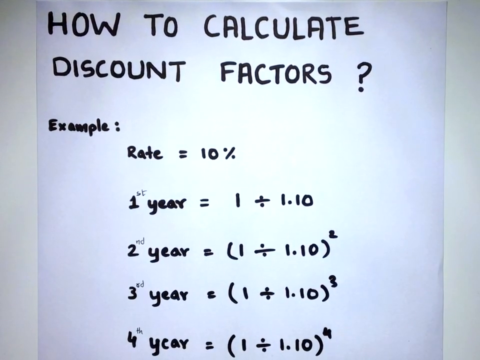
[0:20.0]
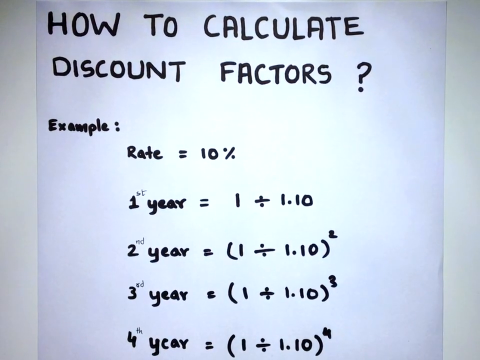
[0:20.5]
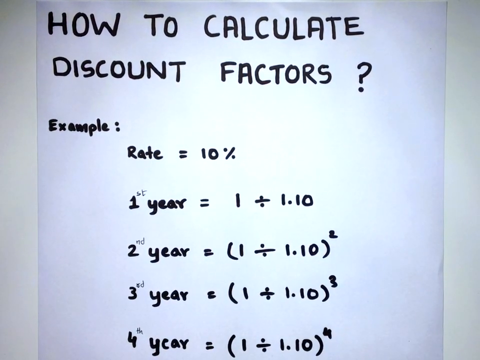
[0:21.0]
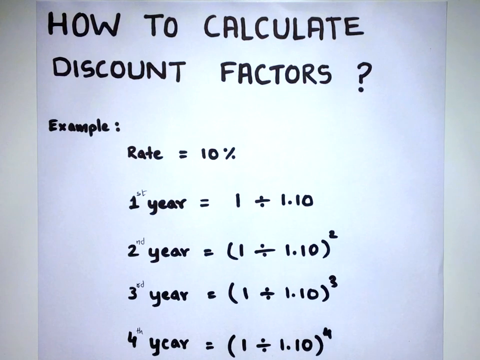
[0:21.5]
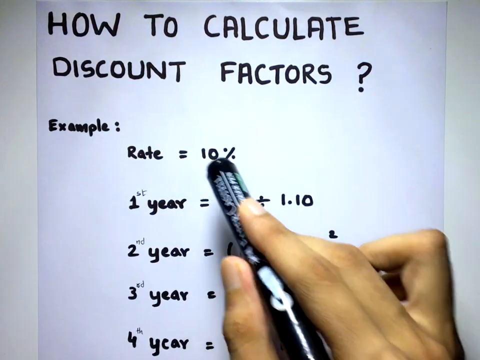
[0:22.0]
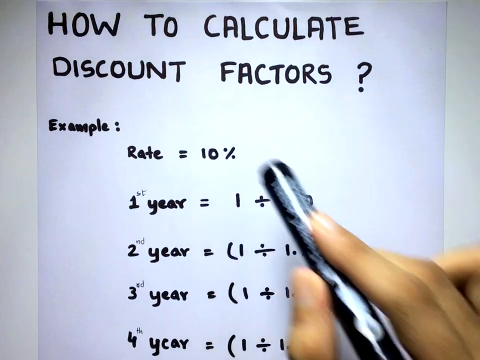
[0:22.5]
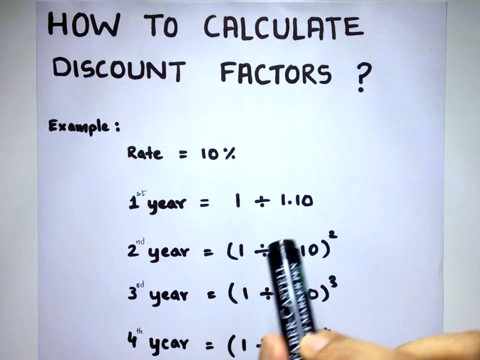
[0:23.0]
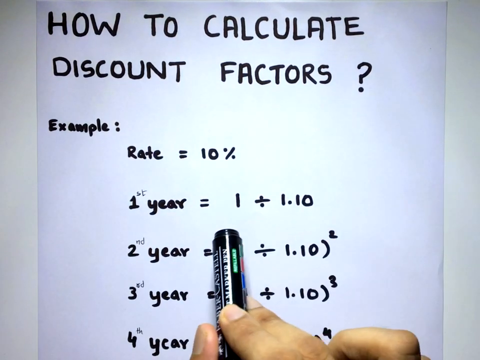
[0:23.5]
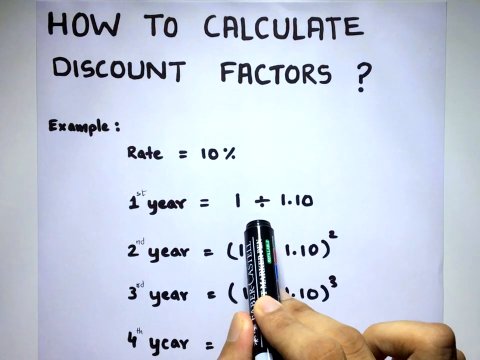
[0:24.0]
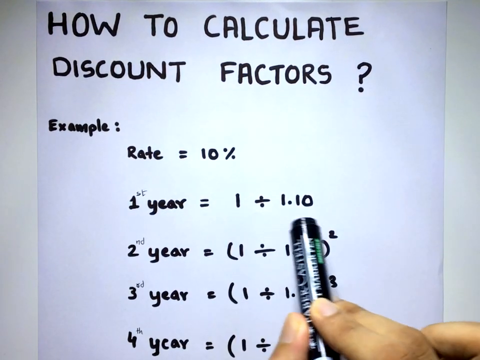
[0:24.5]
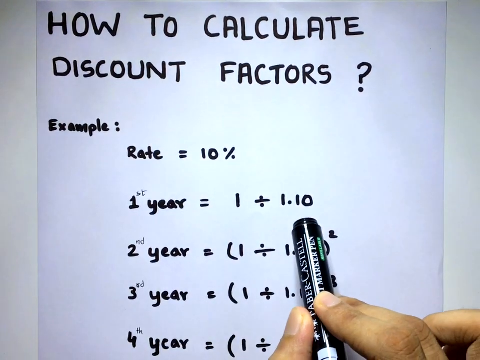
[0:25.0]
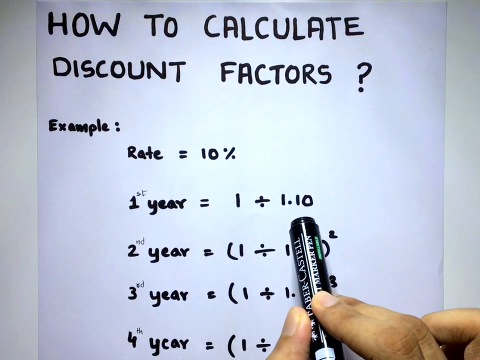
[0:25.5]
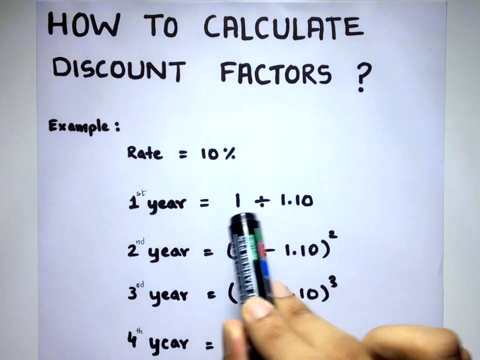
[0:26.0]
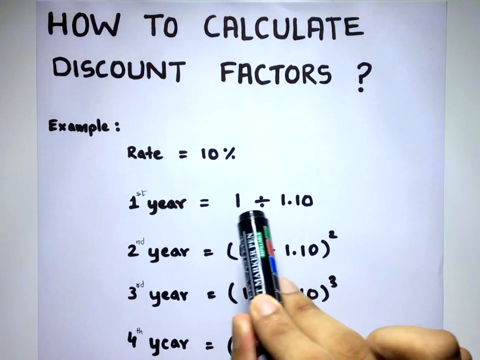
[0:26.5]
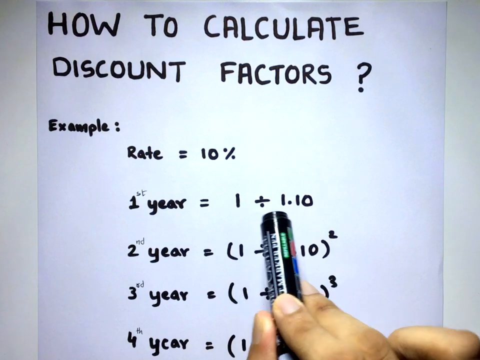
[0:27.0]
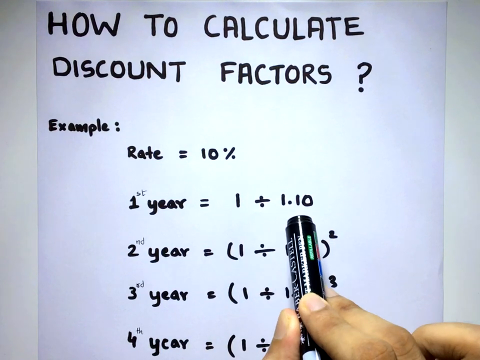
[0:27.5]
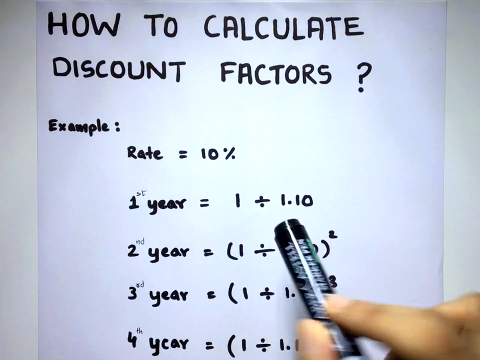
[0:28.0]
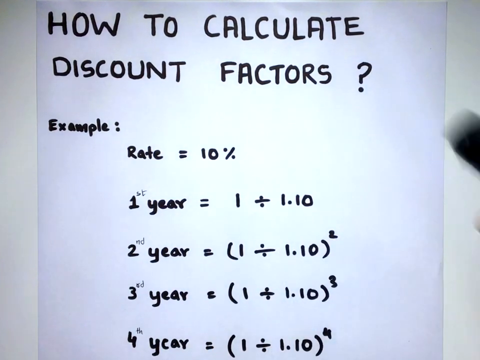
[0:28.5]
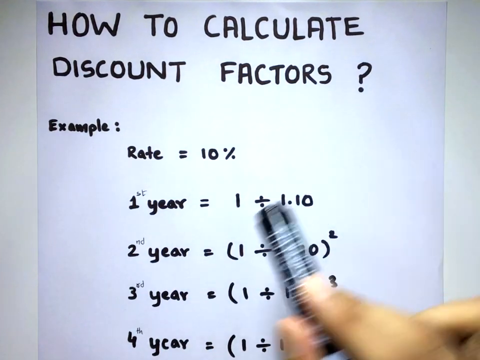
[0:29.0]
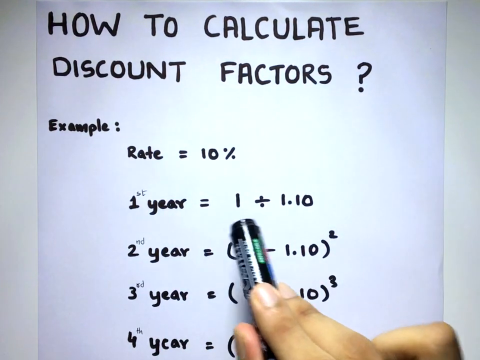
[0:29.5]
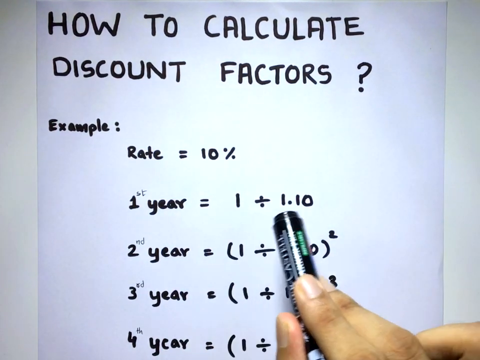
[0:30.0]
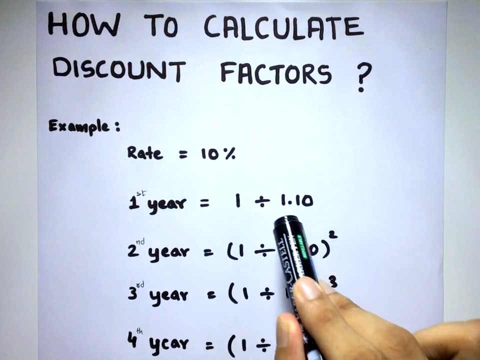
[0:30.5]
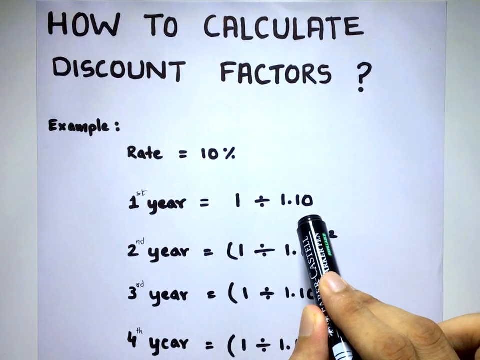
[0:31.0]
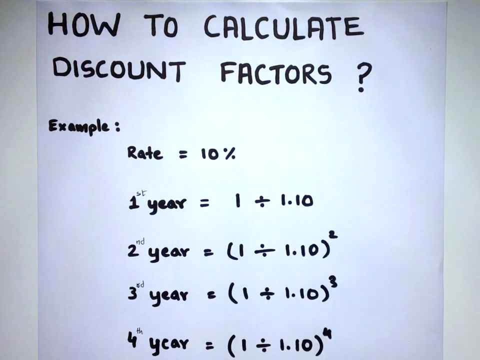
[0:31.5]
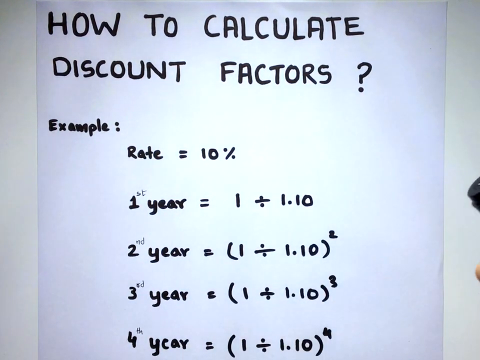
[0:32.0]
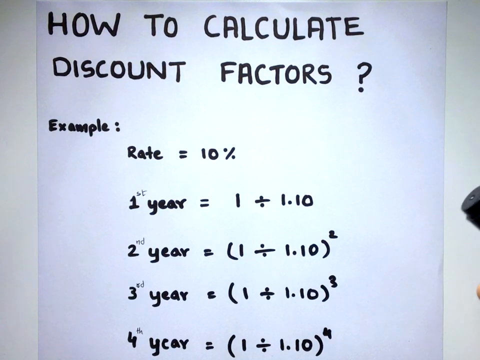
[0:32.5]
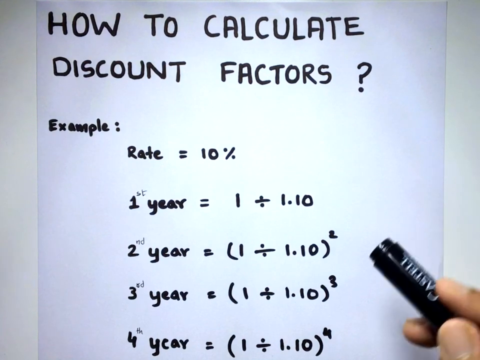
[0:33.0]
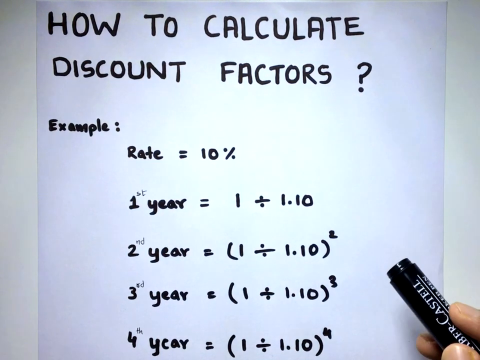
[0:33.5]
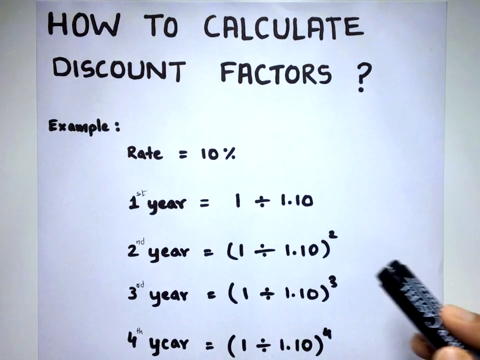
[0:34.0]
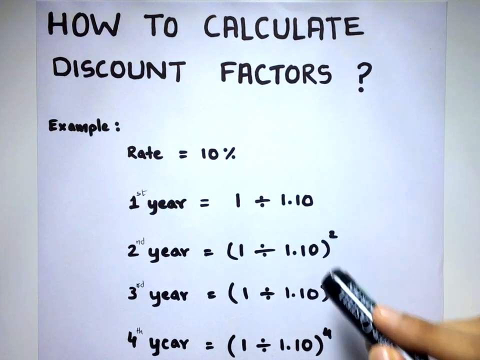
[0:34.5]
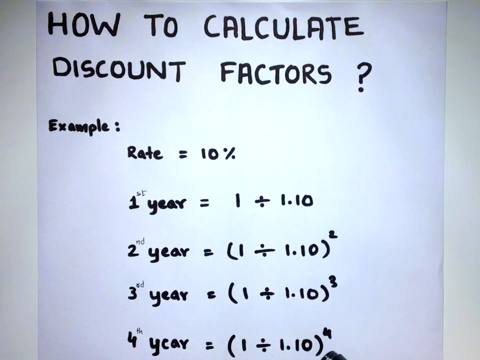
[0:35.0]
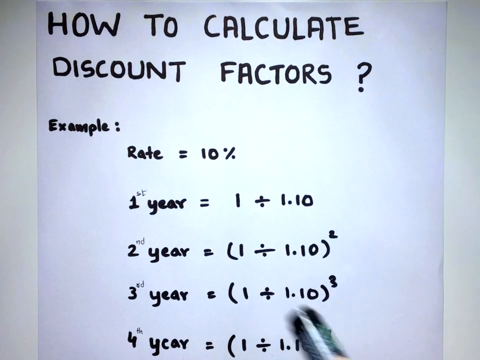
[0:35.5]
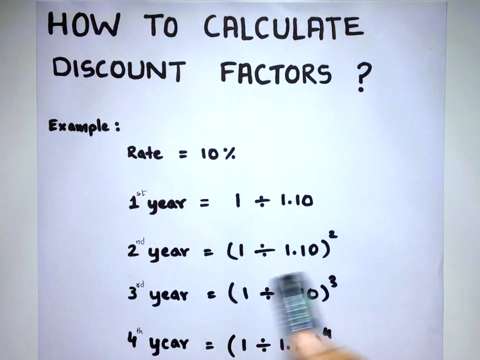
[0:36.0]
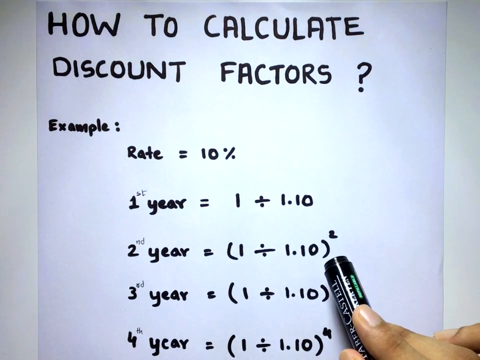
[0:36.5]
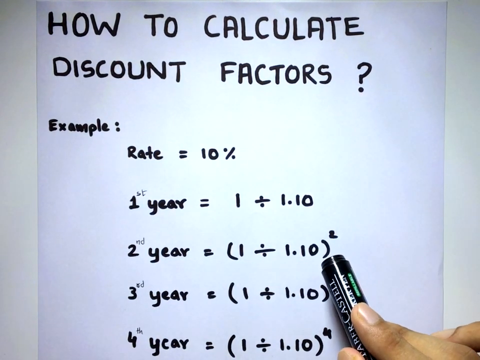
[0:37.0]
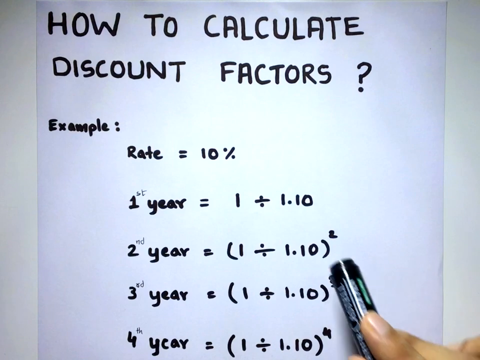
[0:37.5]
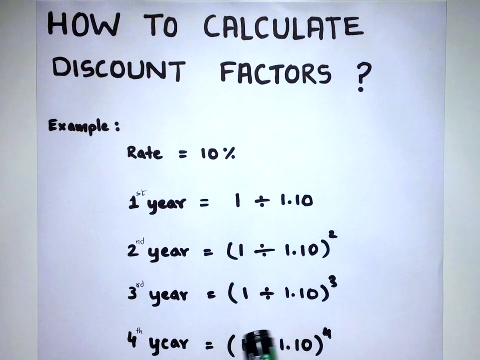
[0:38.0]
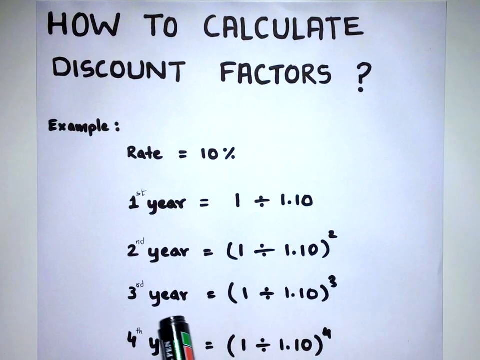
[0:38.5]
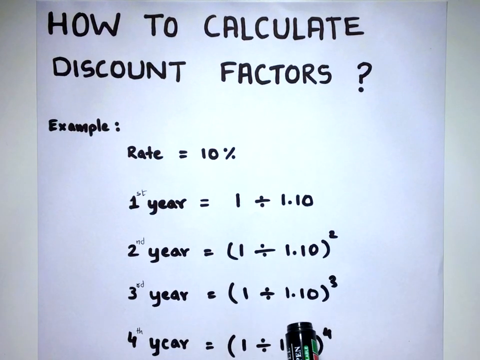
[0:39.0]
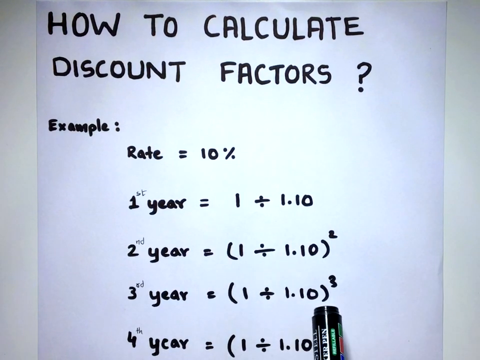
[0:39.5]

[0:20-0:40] The lesson seems to continue. The hand of the person leading the lesson, holding the pen, points to the 10% on the first line, which reads rate equals 10%. It then points to the 10% of 1.10 on the first-year line, moves down to the second year and gestures at it, then gestures at the third line, the third-year equation, and then returns to the first-year equation. He seems to switch between the lines while explaining different aspects of the calculation. Going from the first year to the second and third years, the first year is 1 divided by 1.10, and each year multiplies or squares that, so the second year is 1 divided by 1.10 squared.